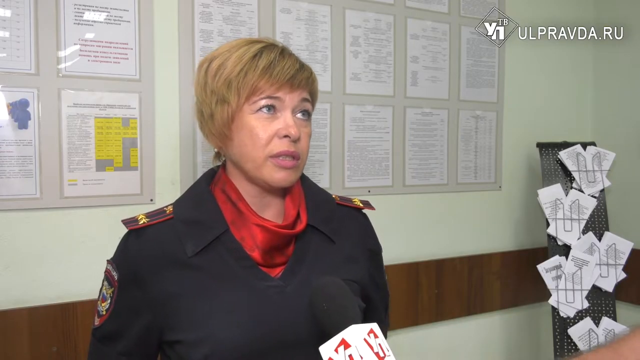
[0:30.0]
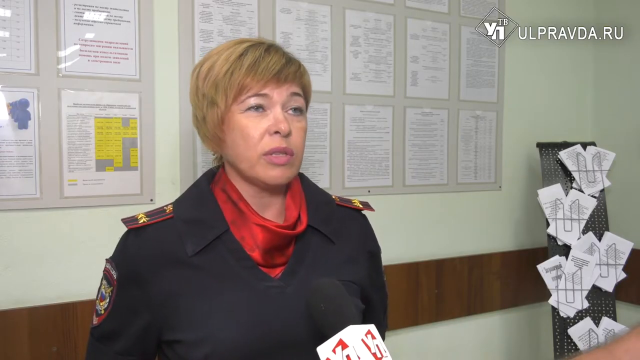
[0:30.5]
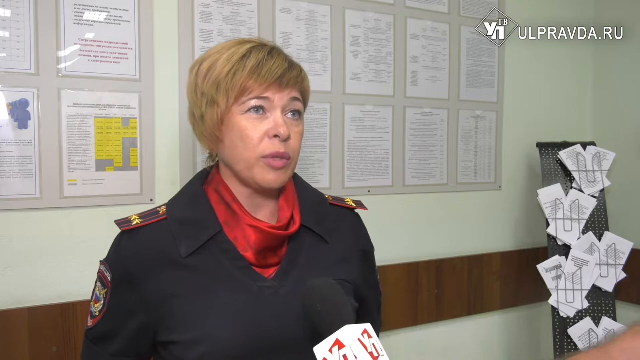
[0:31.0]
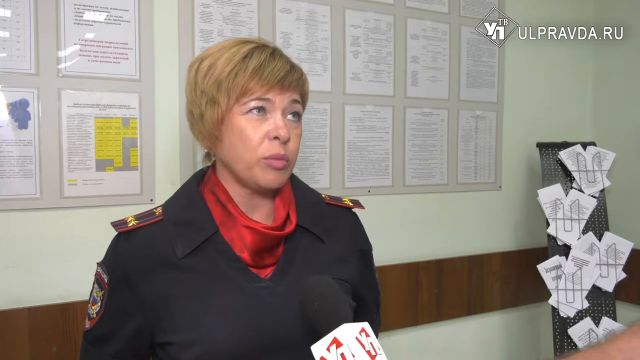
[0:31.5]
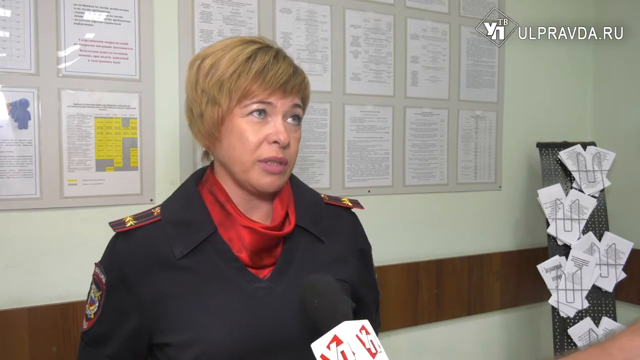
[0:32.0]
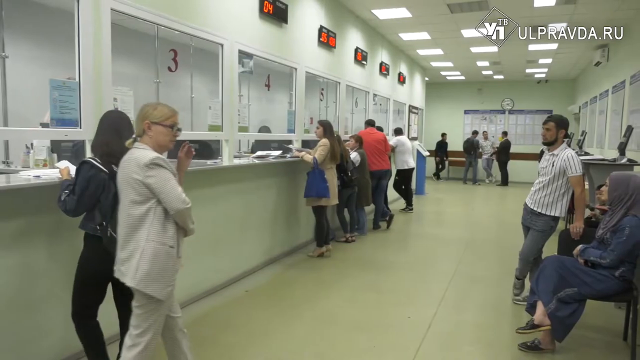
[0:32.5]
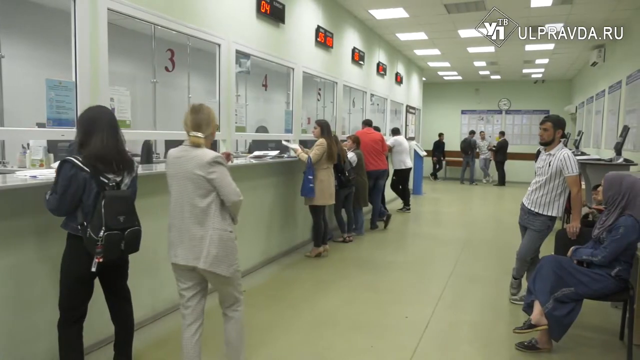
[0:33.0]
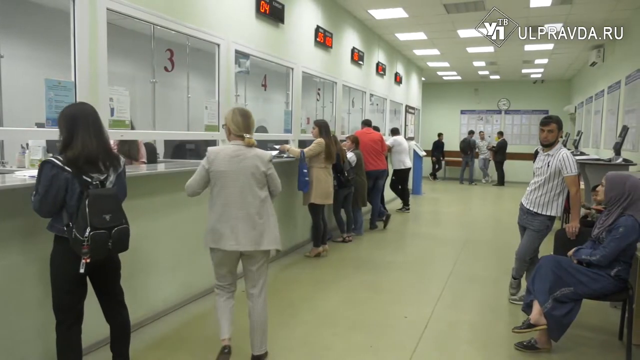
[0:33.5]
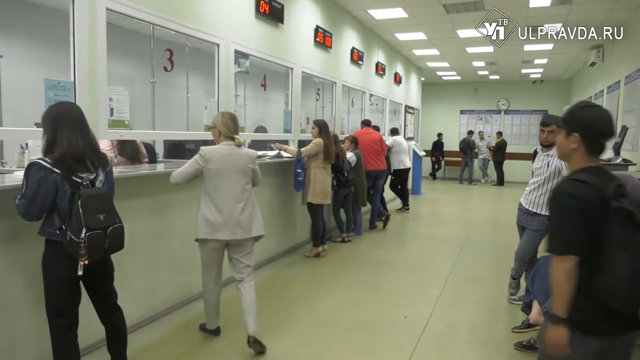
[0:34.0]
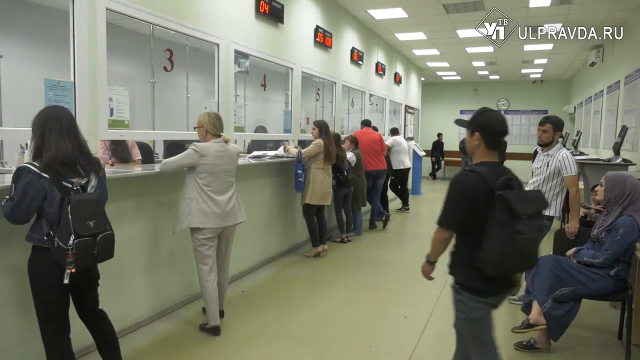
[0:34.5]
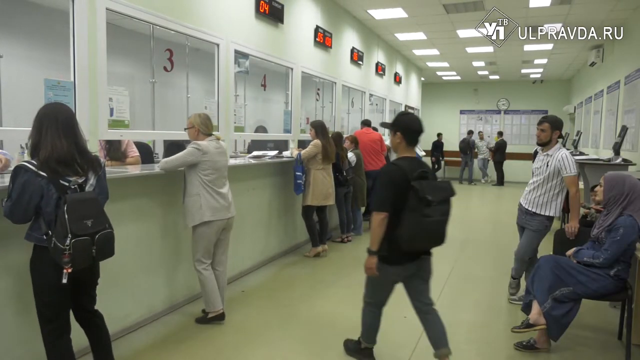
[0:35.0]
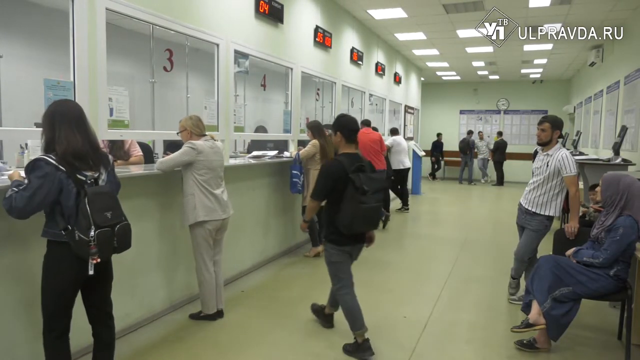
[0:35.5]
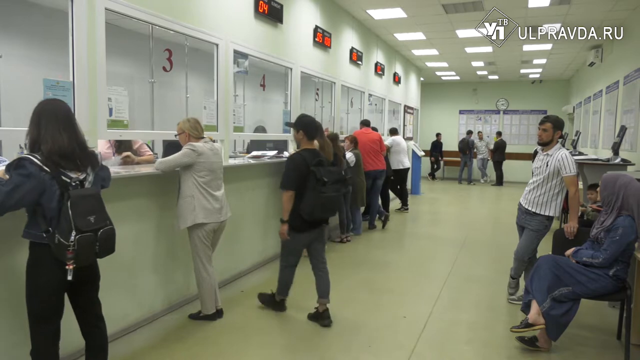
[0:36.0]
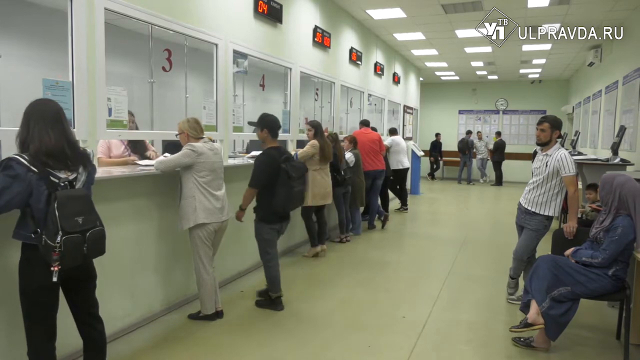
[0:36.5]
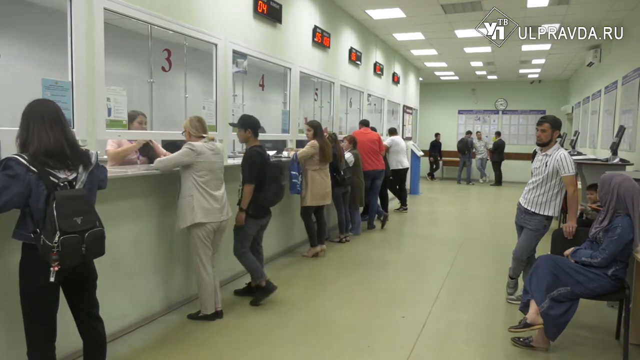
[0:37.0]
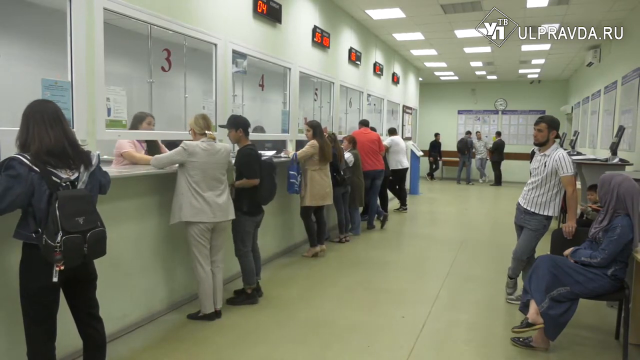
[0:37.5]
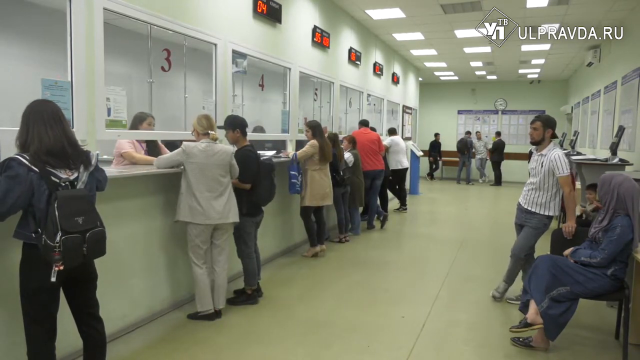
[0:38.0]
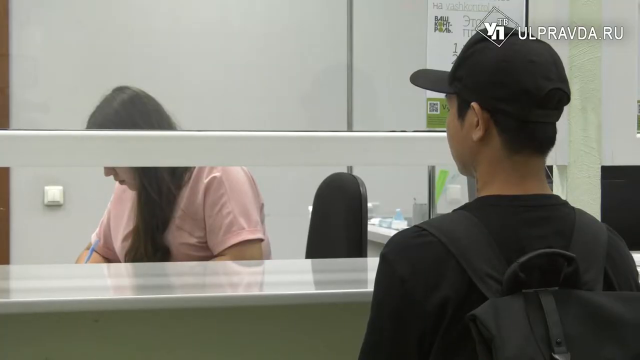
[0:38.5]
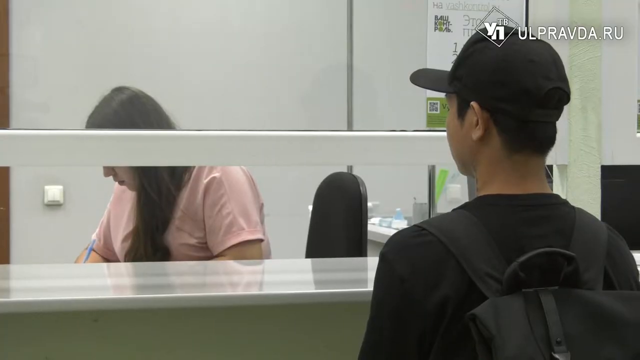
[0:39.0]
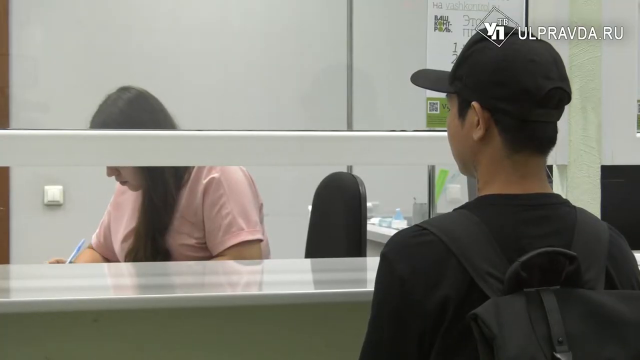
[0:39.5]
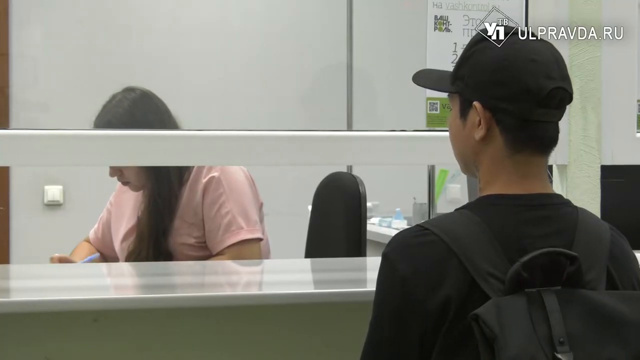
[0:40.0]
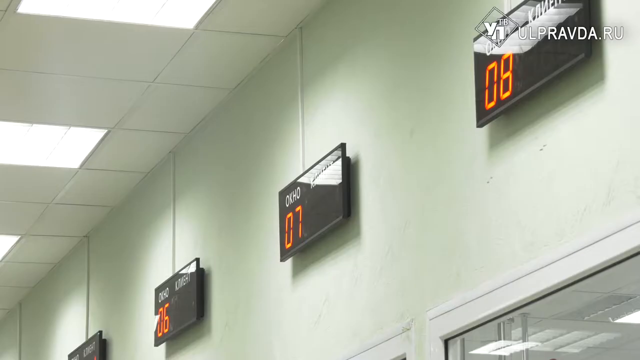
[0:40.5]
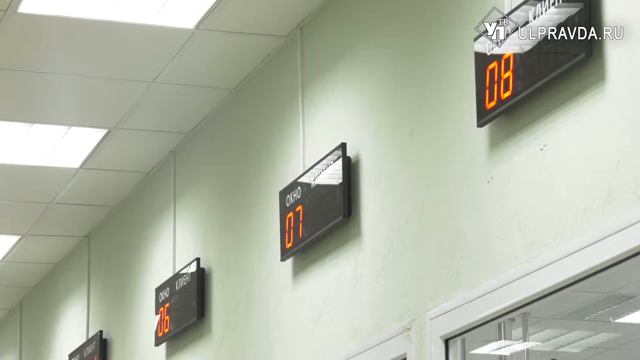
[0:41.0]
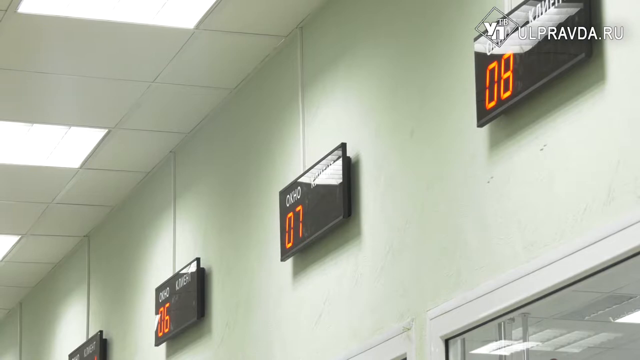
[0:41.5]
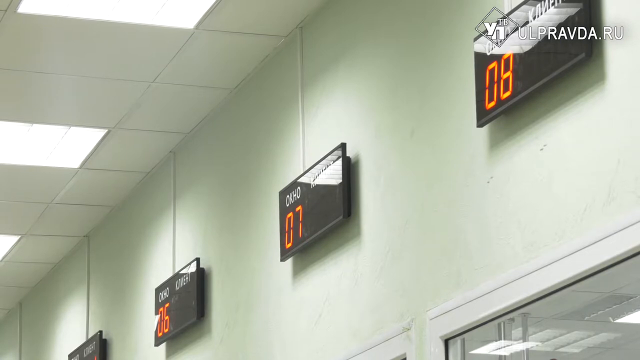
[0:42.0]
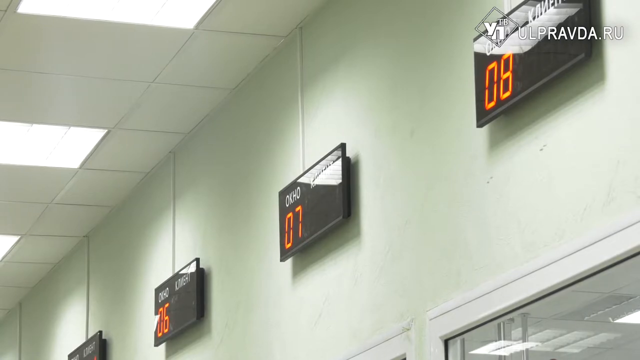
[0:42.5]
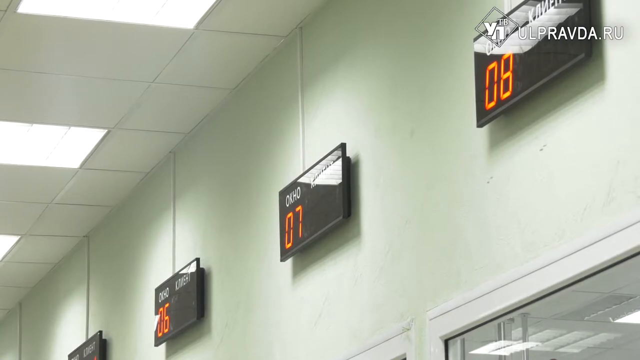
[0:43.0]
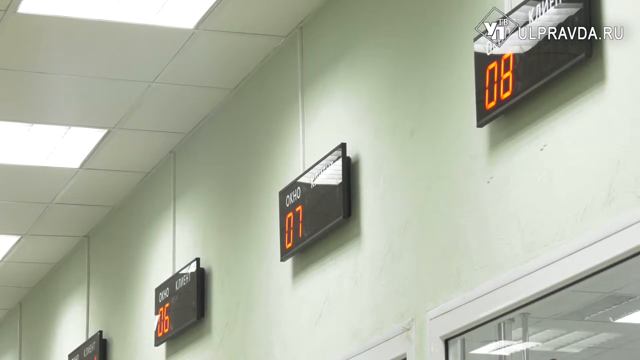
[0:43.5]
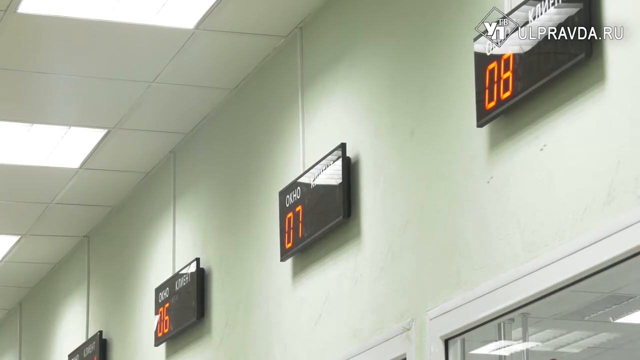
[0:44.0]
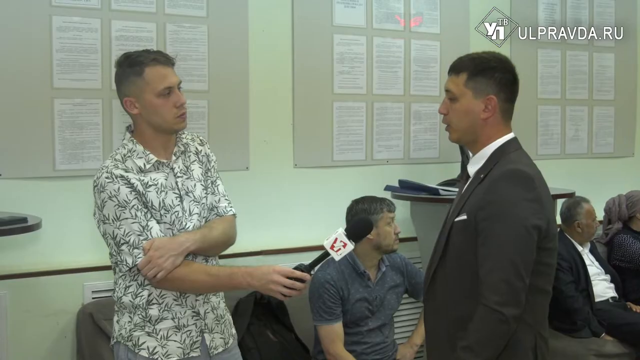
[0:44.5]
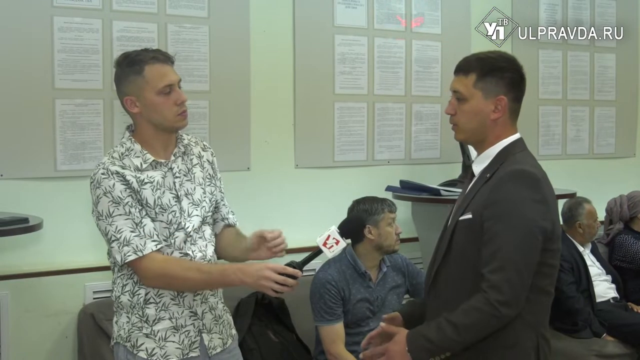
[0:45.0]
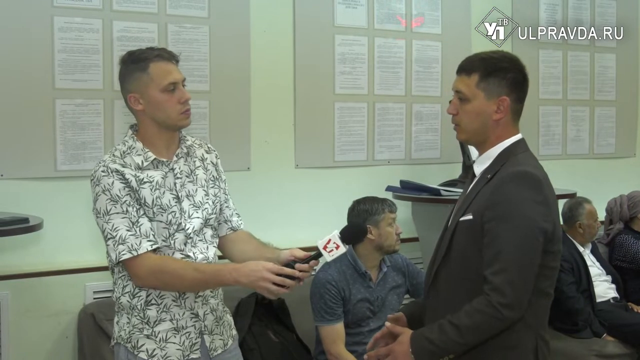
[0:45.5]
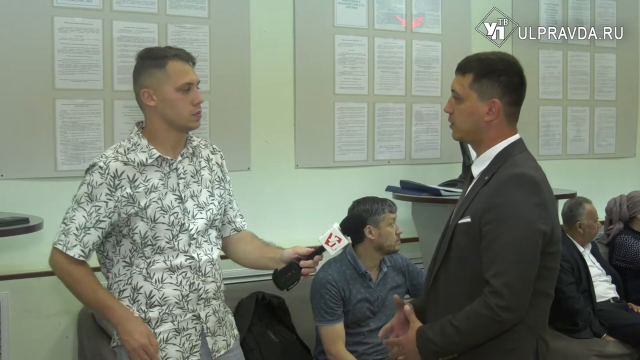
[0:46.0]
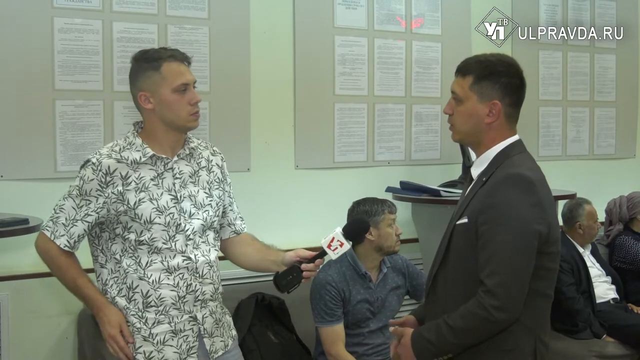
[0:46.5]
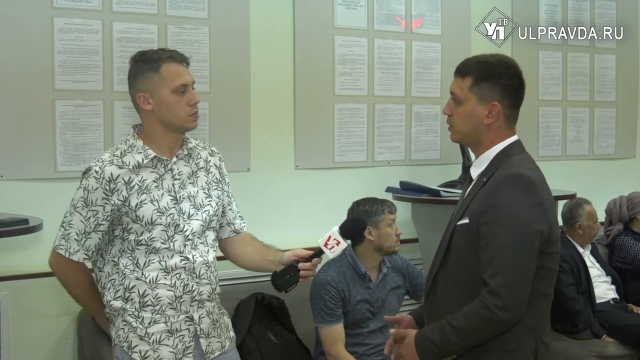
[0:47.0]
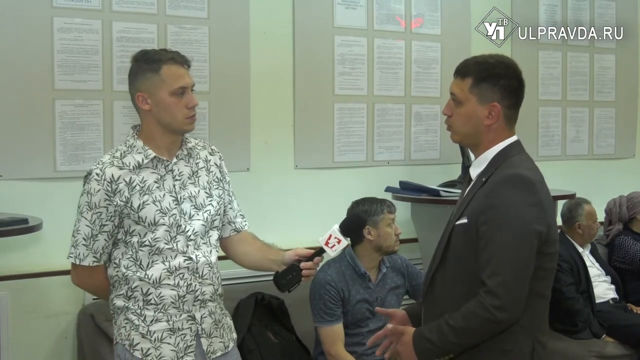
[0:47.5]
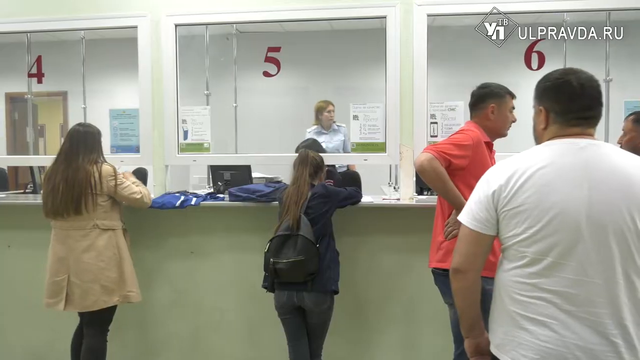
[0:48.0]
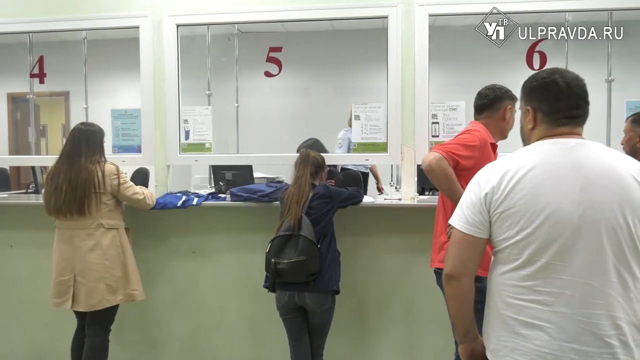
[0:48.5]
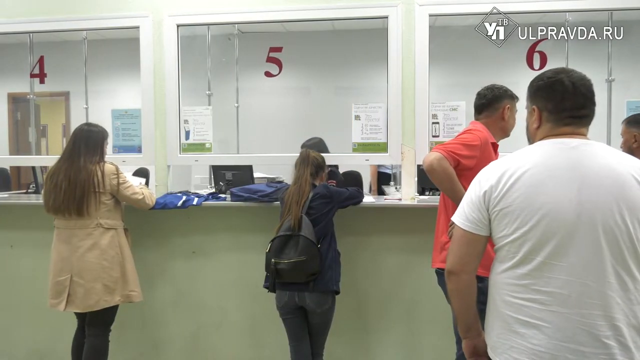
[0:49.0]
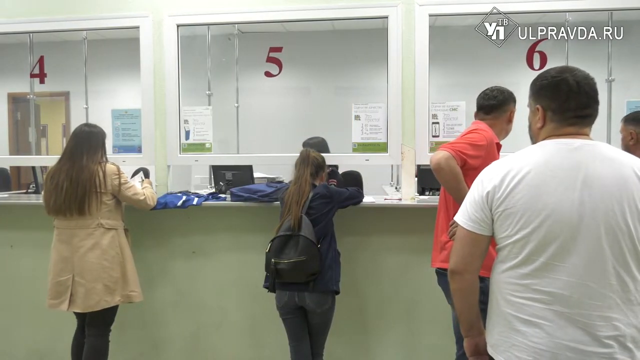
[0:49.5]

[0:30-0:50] A woman talks directly to the camera while being interviewed with a microphone. The scene quickly changes to many people waiting in an area where others process them and get them through to the other side. Digital panels hang at the top of the wall, showing numbers such as four, five and six, apparently indicating the order of the people waiting. The waiting people are patient and appear somewhat bored, while the people on the other side of the panel look through their paperwork. Judging by the lighting, it appears to be daylight outside.